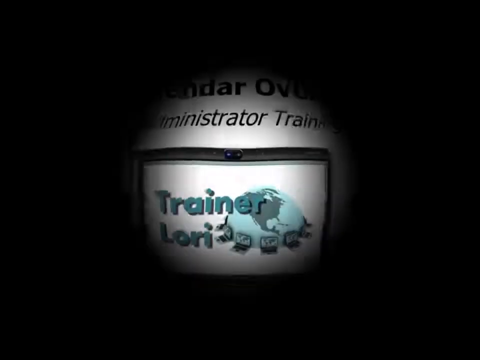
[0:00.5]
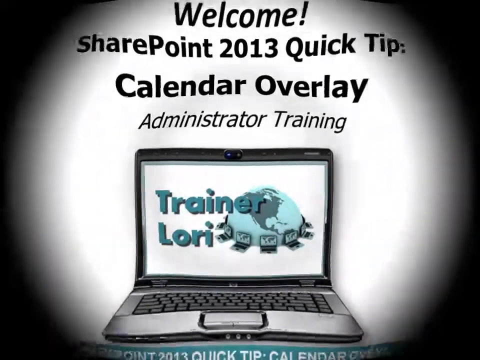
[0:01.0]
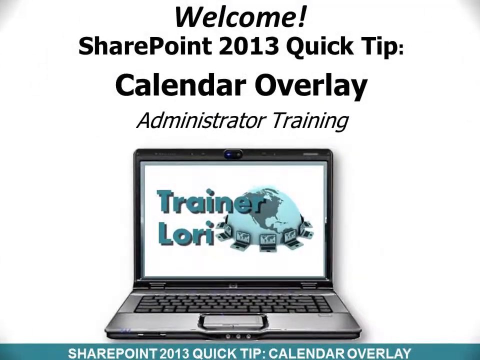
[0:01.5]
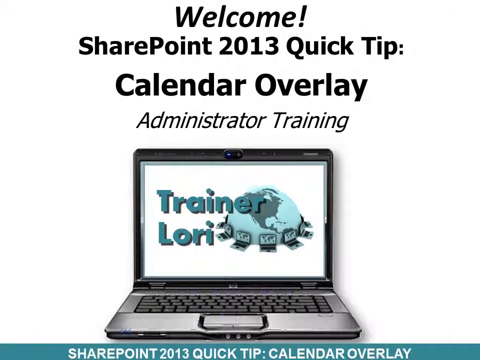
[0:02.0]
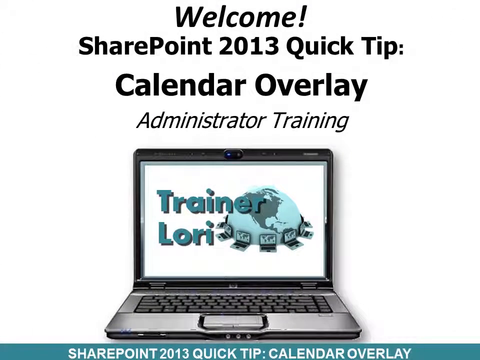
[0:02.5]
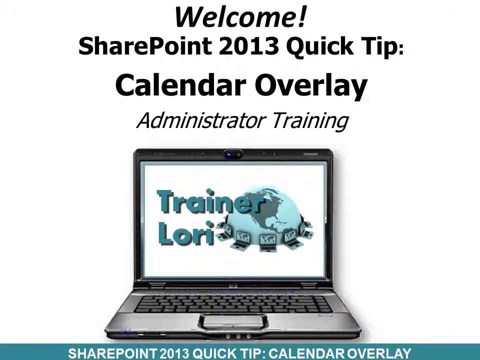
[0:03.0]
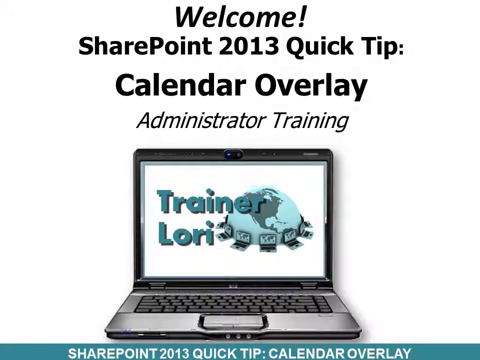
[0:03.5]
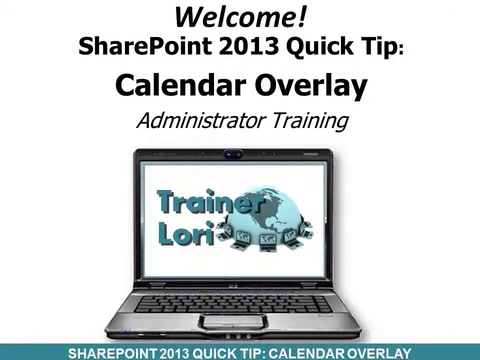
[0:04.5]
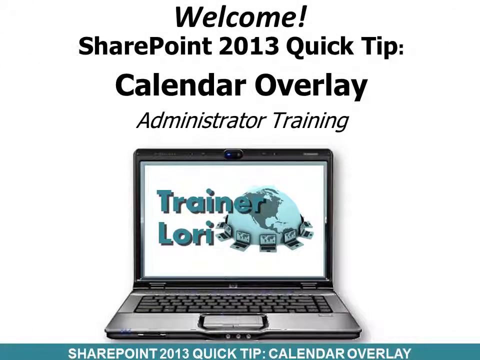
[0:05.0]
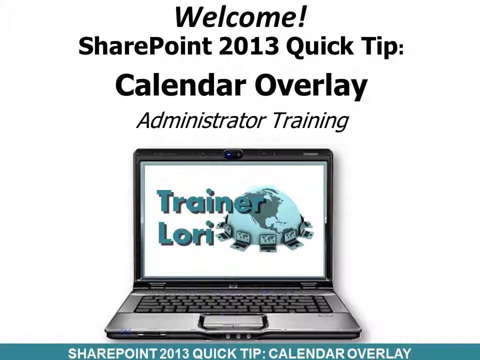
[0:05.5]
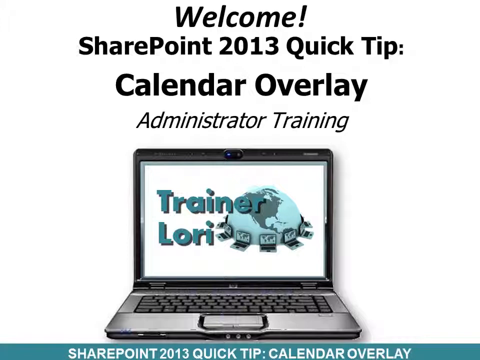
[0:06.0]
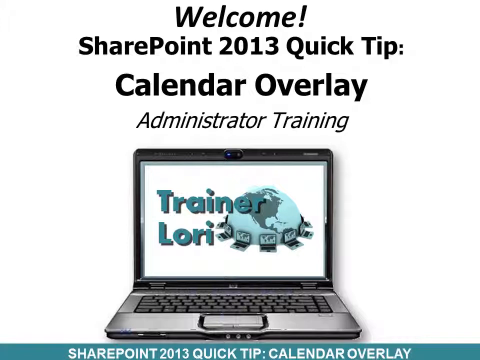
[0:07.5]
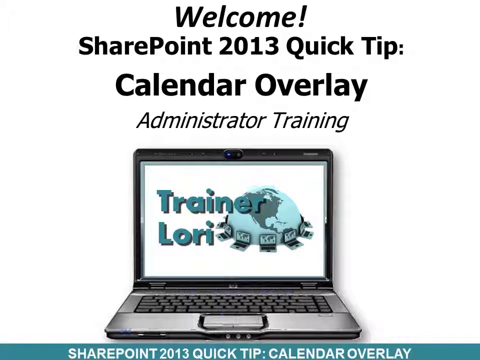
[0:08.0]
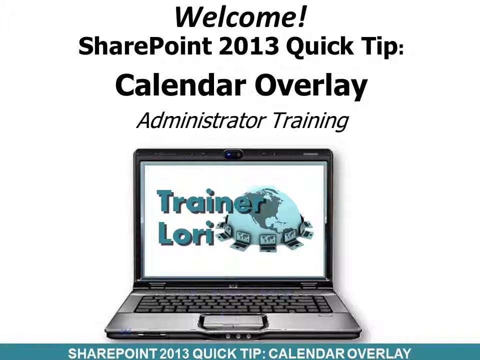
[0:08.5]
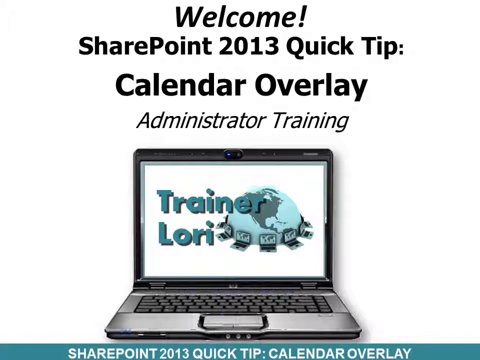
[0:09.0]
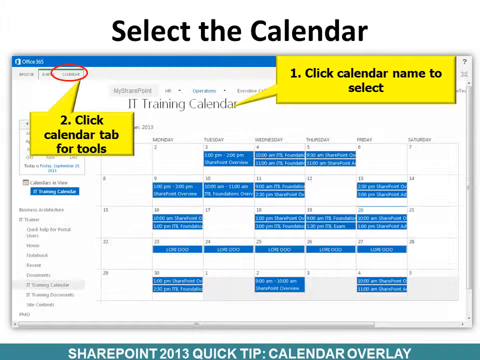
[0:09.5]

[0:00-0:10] The video opens on a white screen with brown font, where "welcome" appears with the main subject written under it. The black or dark brown text reads "welcome SharePoint 2013 quick tip. Calendar overlay administrator training." This title screen then cuts with a simple transition to a second white screen with blue font that is more of a description of the video. It shows a picture of a laptop with a globe graphic on it cut in half, with a bunch of black laptop graphics around it, and "trainer Lori" in Azure blue writing, naming the instructor.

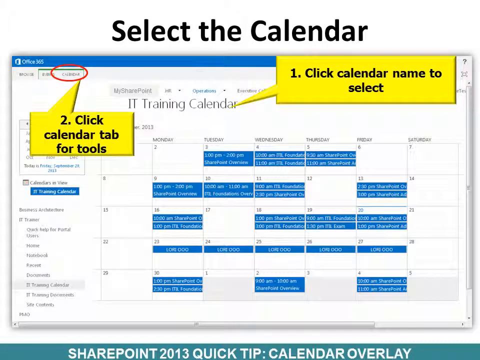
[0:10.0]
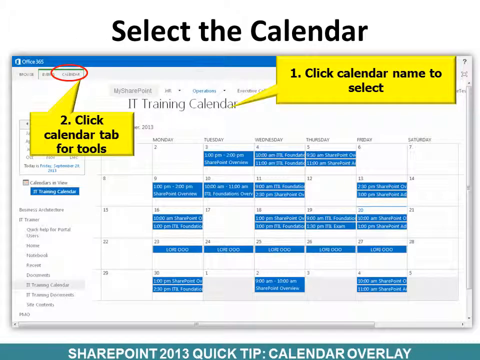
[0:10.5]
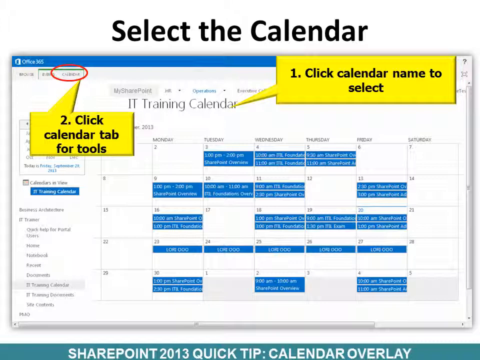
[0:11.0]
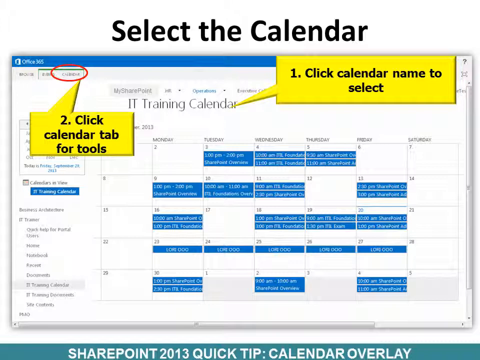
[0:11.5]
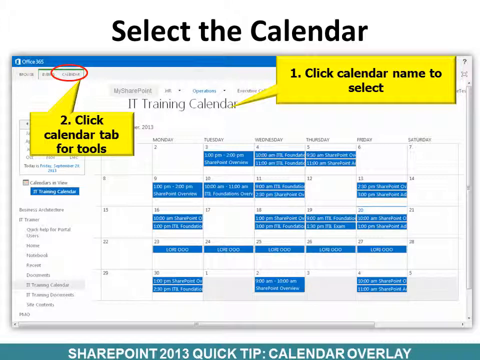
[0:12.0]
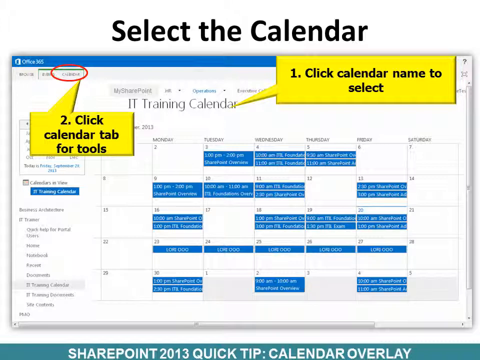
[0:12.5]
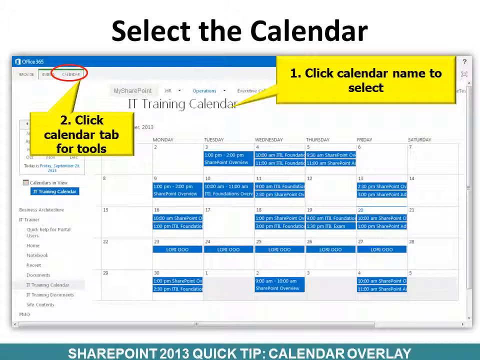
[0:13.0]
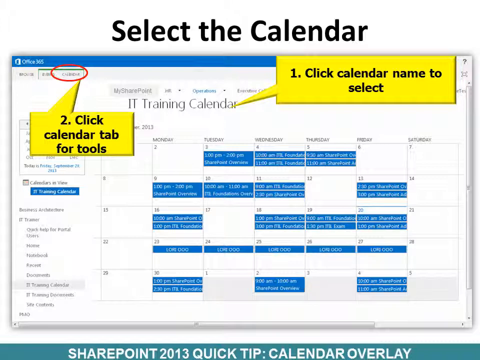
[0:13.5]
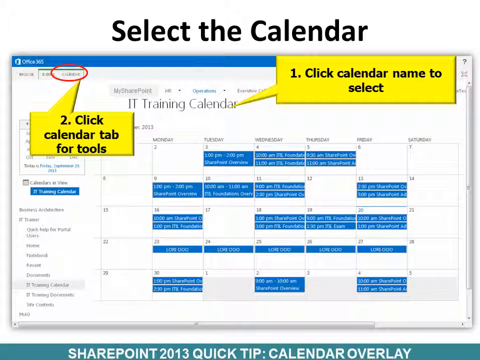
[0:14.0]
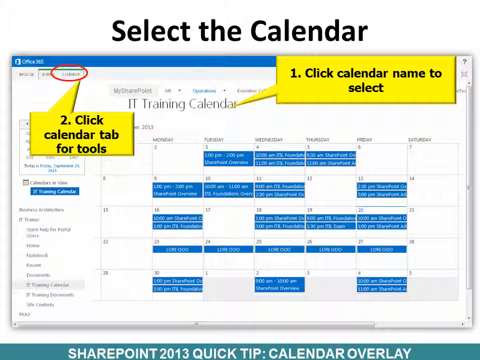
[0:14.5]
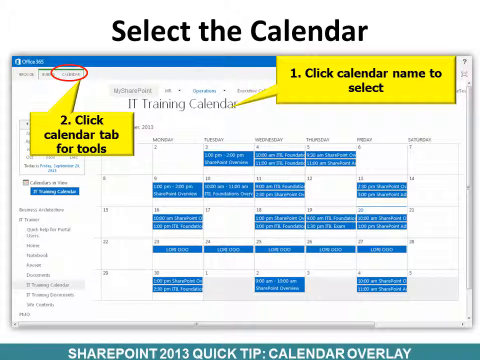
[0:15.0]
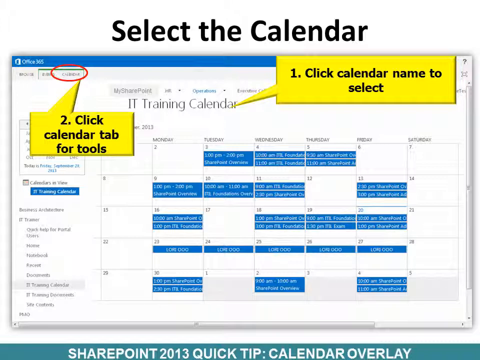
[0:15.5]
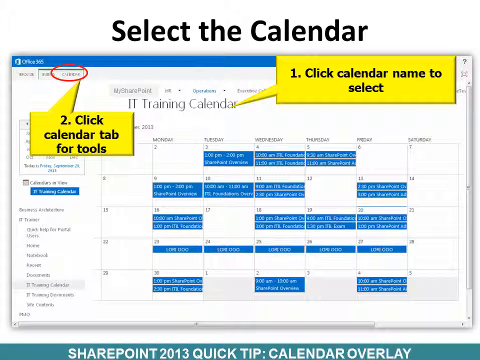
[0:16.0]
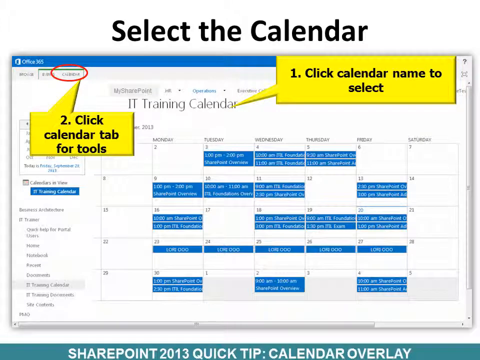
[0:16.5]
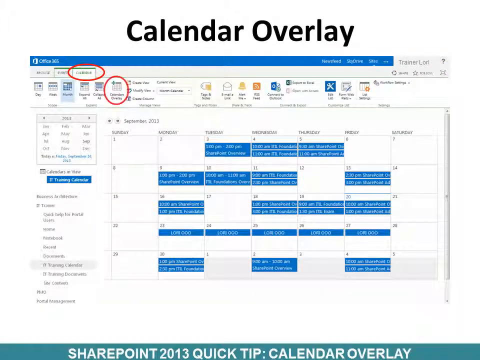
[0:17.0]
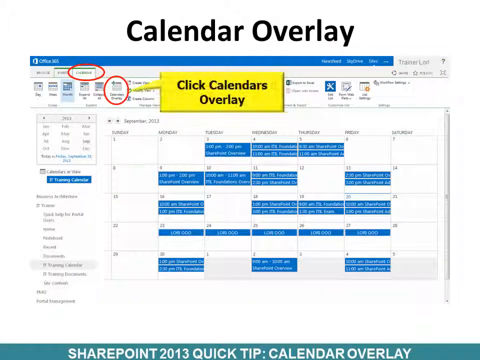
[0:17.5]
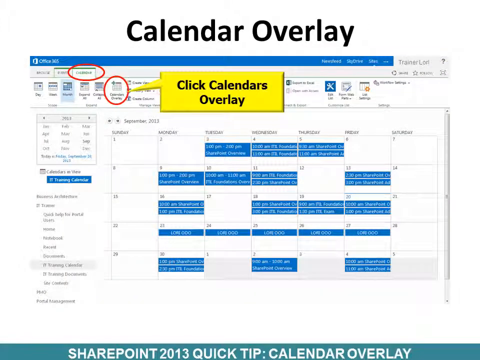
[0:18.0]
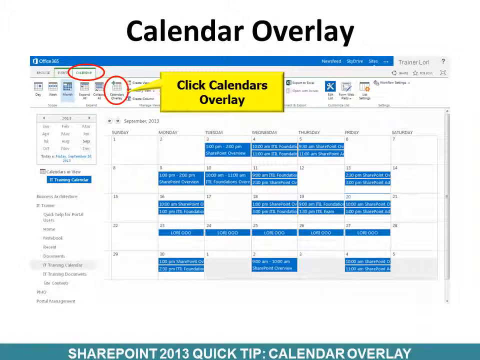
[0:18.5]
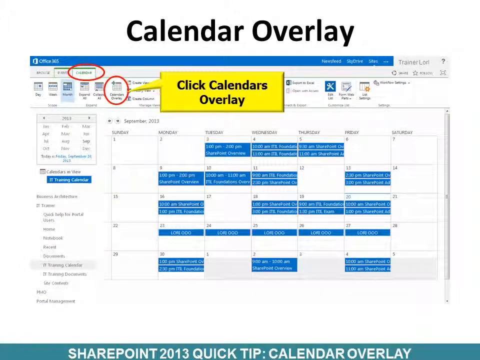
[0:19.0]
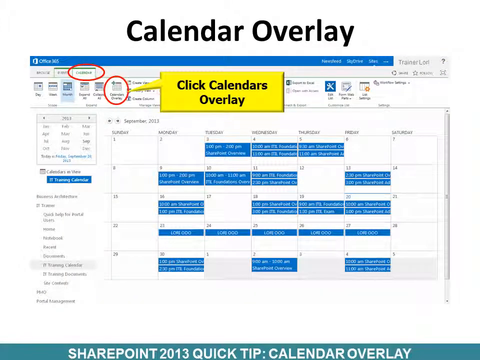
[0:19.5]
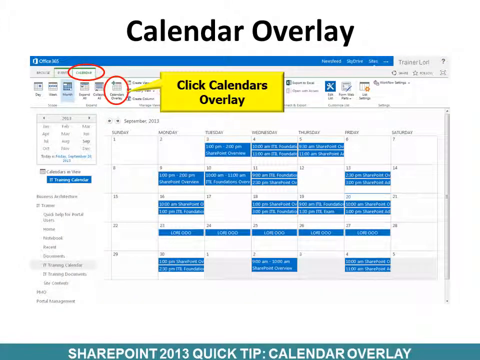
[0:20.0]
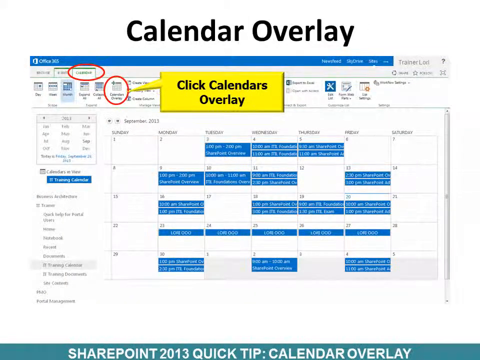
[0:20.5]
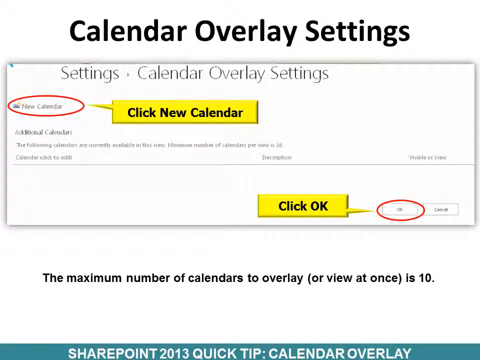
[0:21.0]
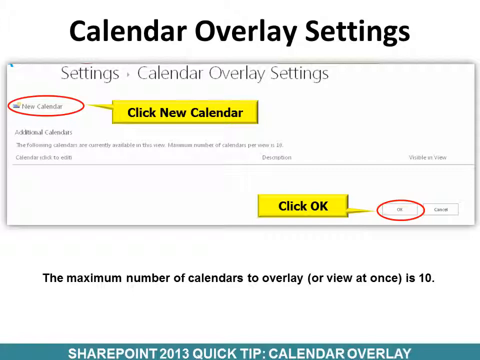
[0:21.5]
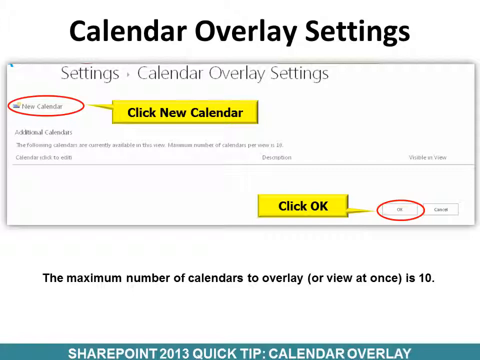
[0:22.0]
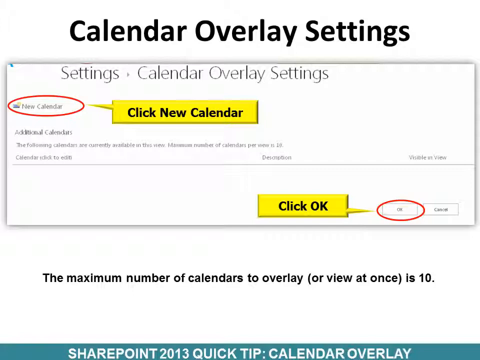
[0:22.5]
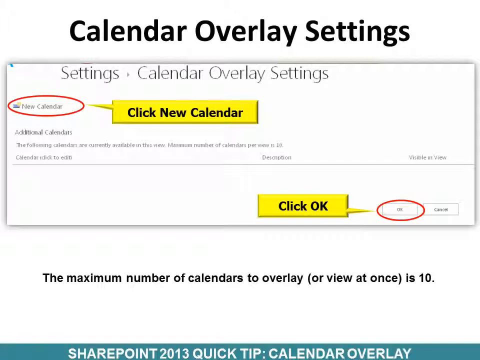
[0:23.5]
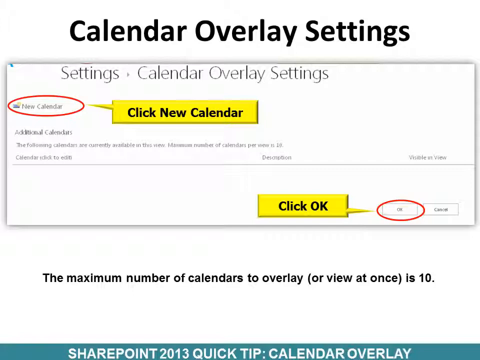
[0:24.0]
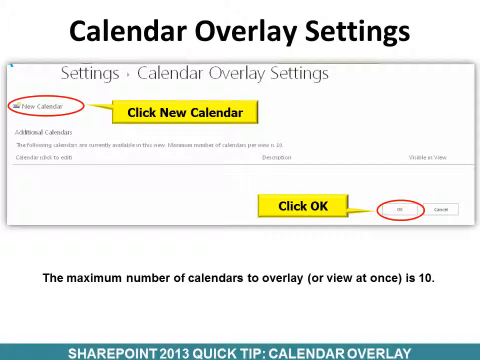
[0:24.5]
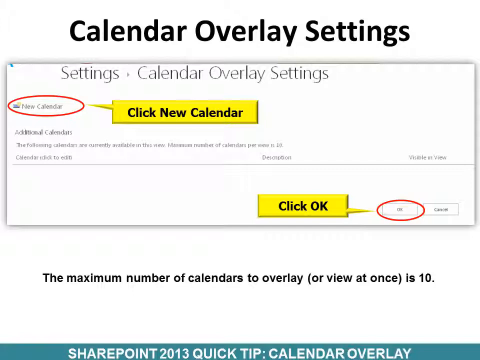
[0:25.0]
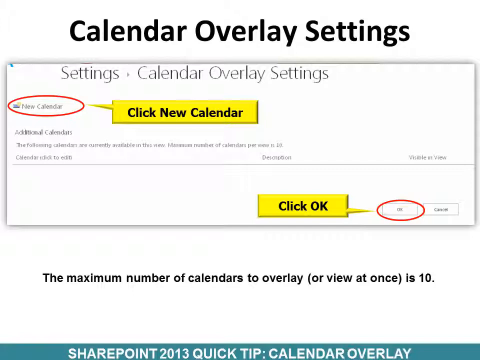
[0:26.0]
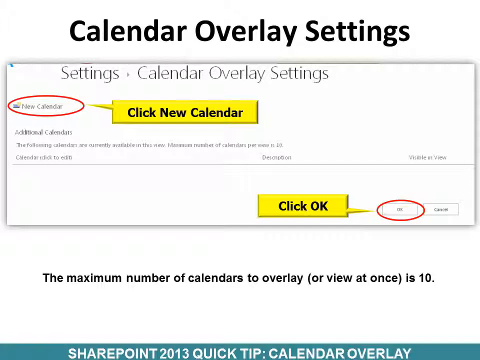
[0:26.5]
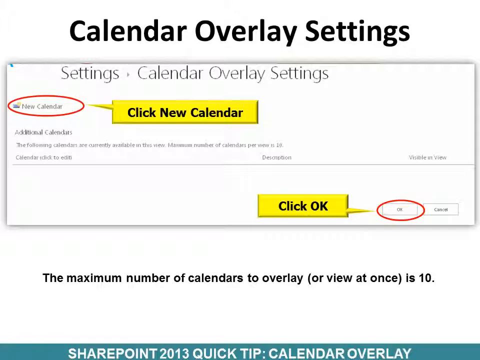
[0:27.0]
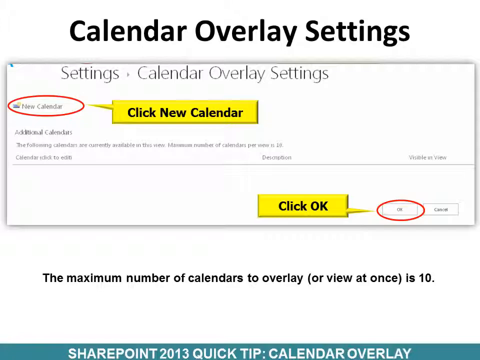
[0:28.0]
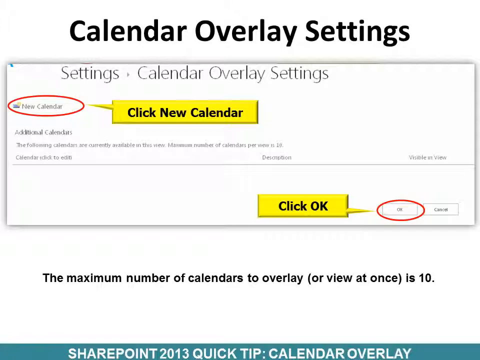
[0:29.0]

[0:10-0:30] Text at the top of the video says "select the calendar." In yellow graphics, step one reads "click calendar name to select," for choosing an IT training calendar, and step two says to click the calendar tab for tools. A blue navigation bar runs across the screen with light gray tabs offering three choices, one of which is circled in red, on a graphic that says "click calendar tab for tools" on an IT training calendar with trainer Lori. The instructions go step by step, page by page and tab by tab, through creating a calendar overlay and its settings, apparently including choosing certain training times. Part of the lesson is cut off so it cannot quite be seen.